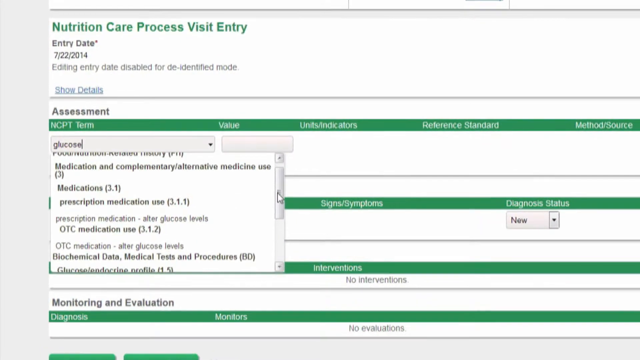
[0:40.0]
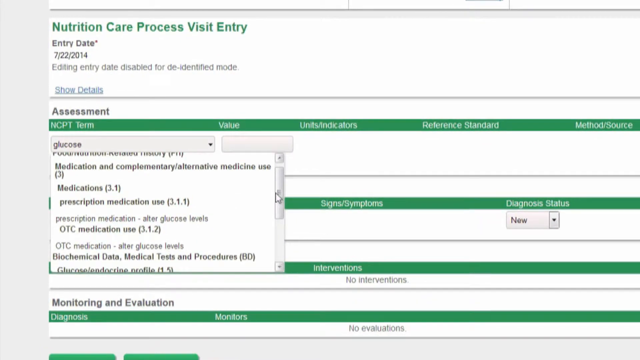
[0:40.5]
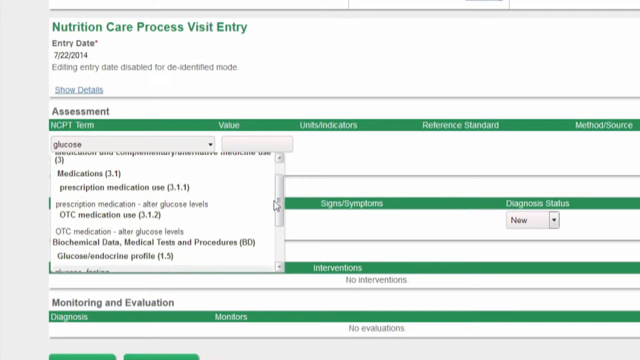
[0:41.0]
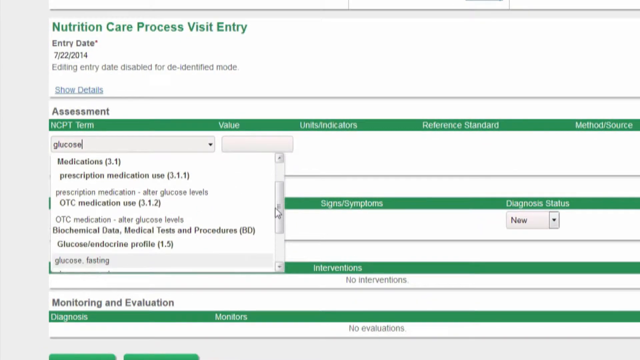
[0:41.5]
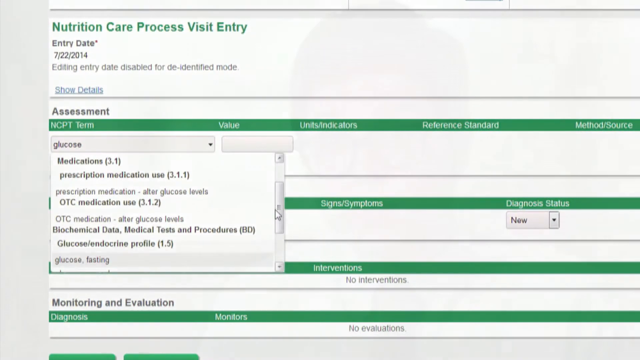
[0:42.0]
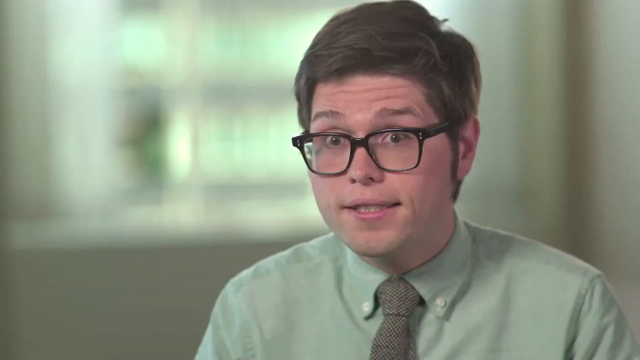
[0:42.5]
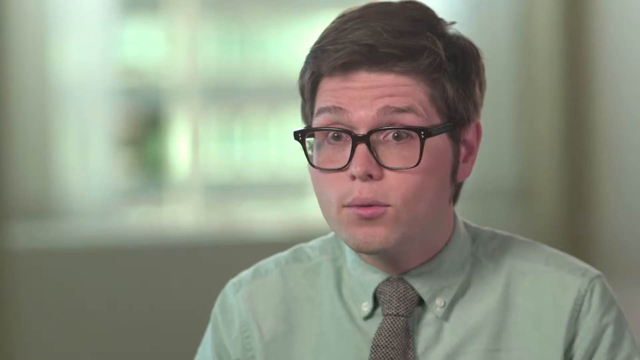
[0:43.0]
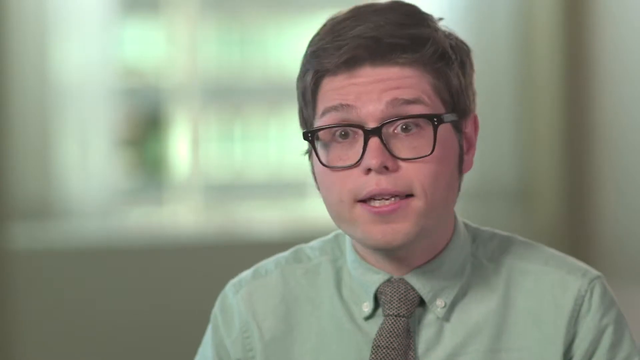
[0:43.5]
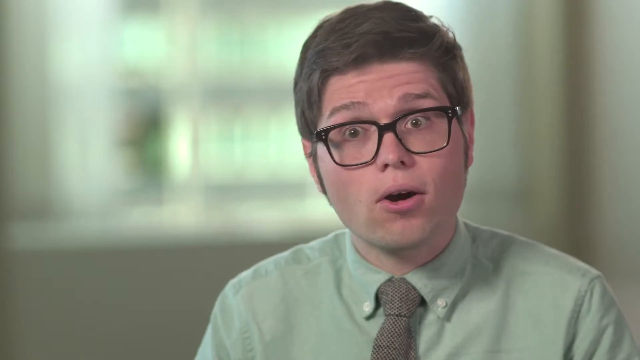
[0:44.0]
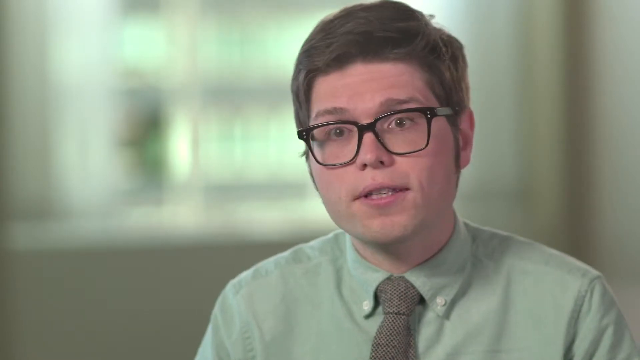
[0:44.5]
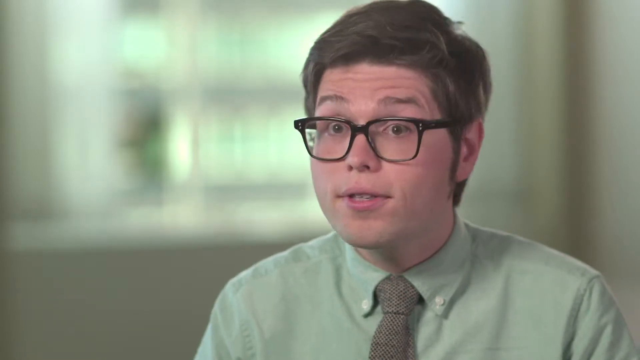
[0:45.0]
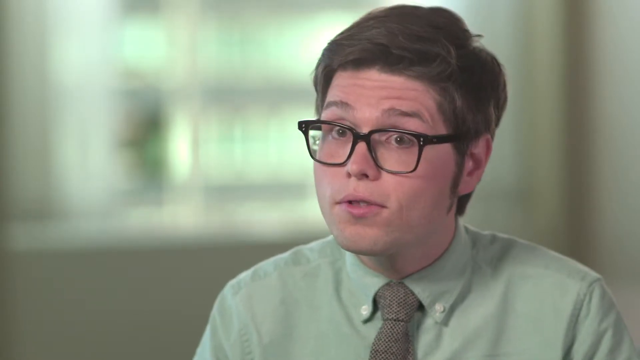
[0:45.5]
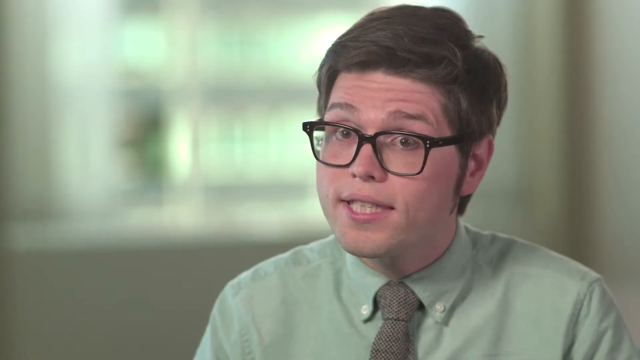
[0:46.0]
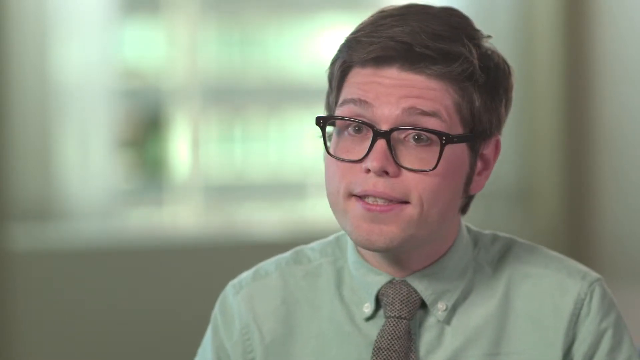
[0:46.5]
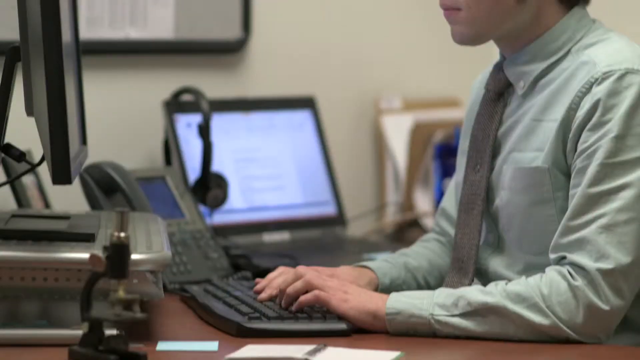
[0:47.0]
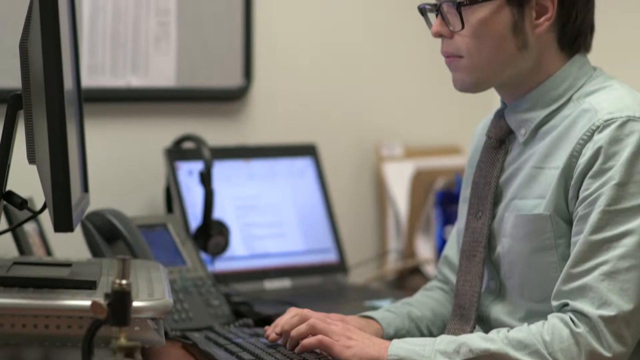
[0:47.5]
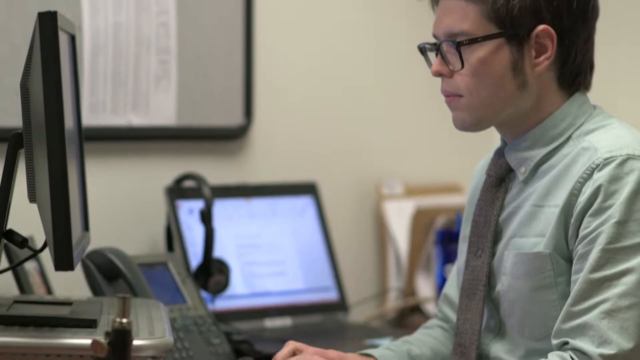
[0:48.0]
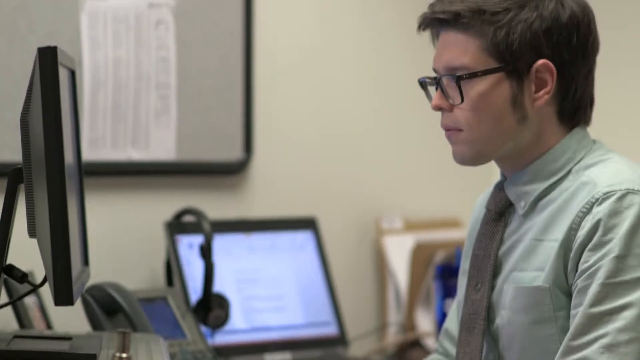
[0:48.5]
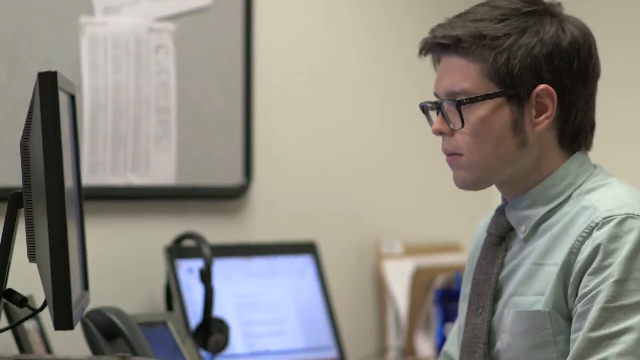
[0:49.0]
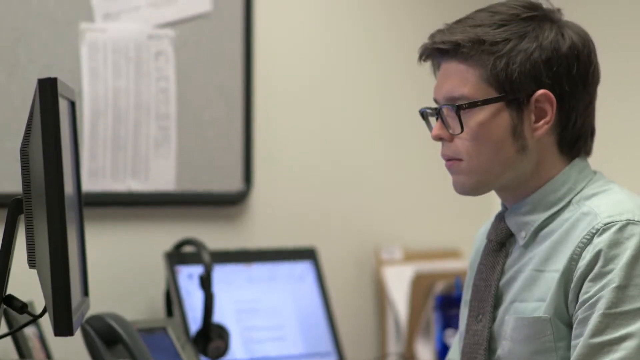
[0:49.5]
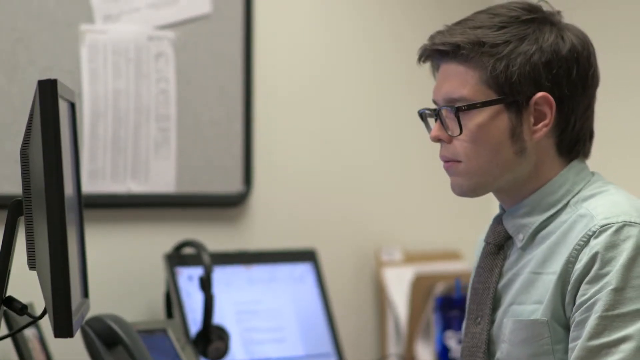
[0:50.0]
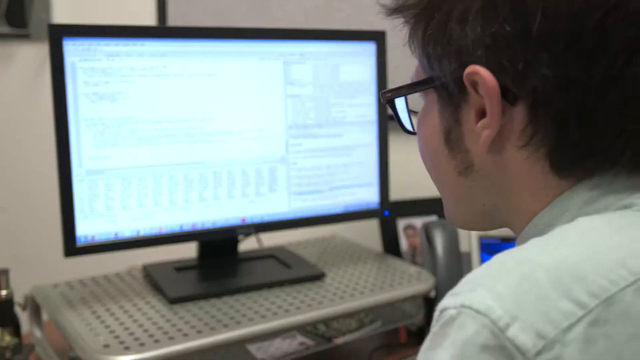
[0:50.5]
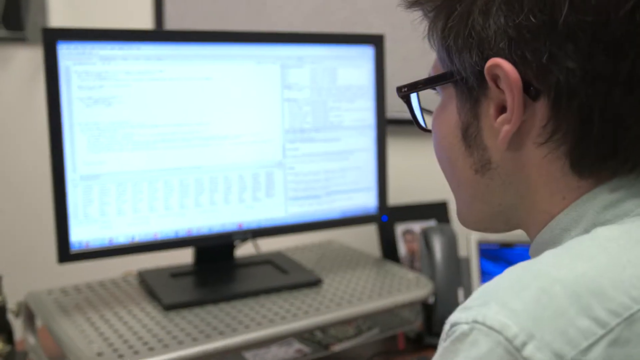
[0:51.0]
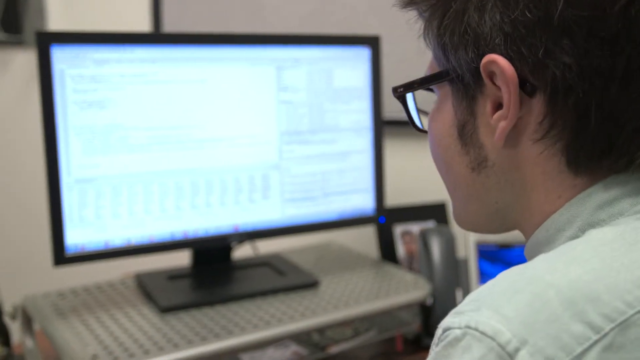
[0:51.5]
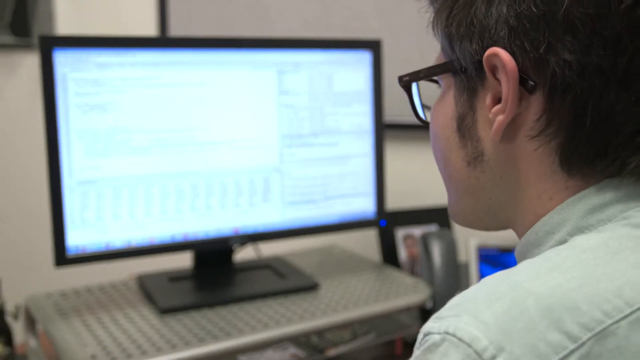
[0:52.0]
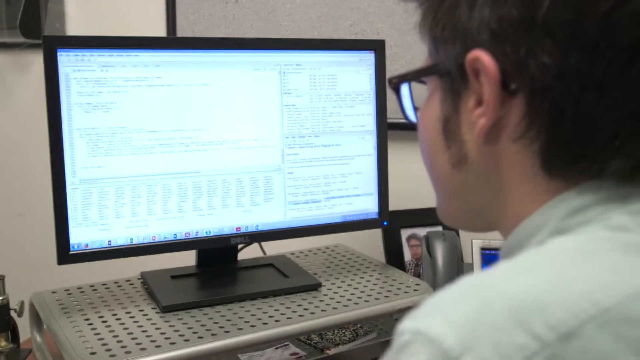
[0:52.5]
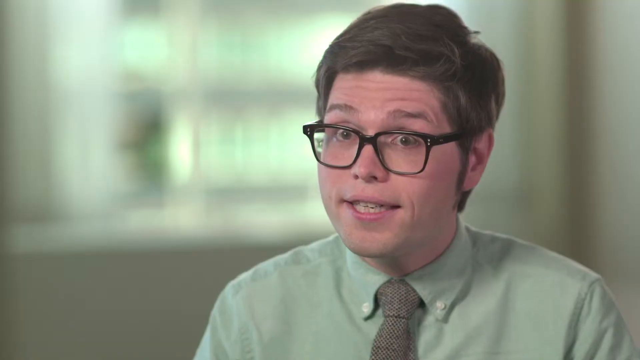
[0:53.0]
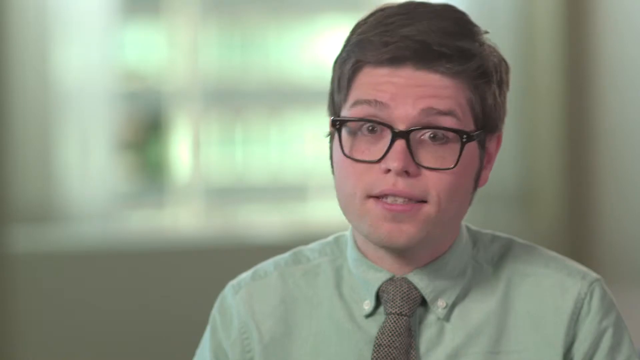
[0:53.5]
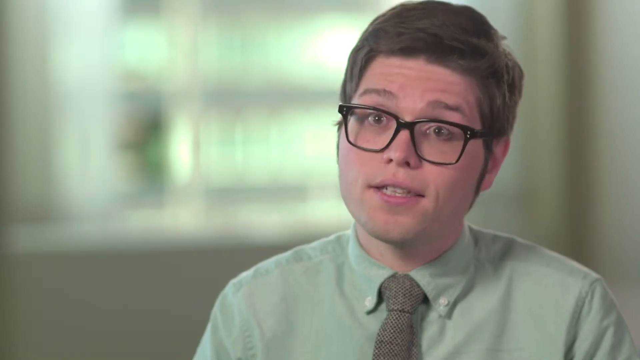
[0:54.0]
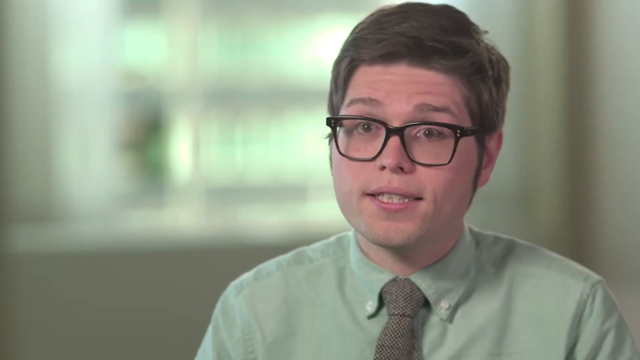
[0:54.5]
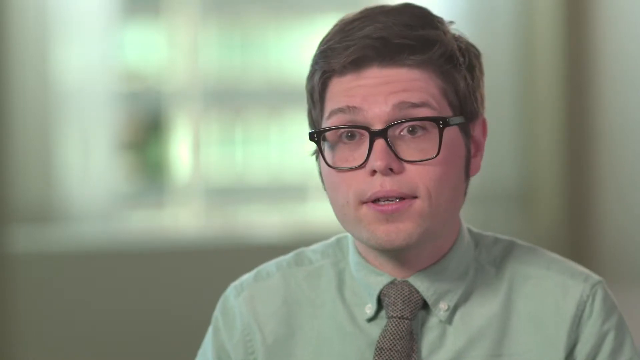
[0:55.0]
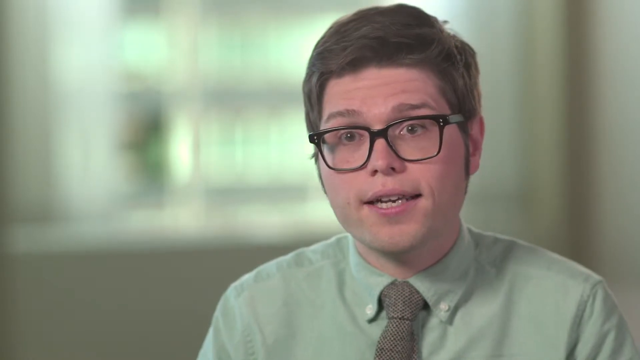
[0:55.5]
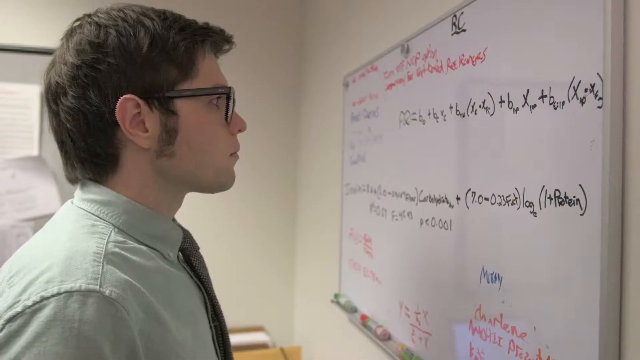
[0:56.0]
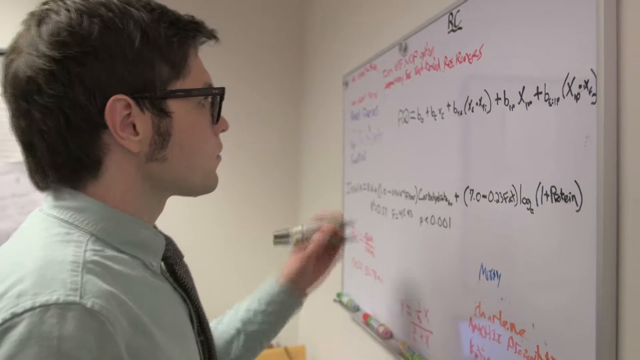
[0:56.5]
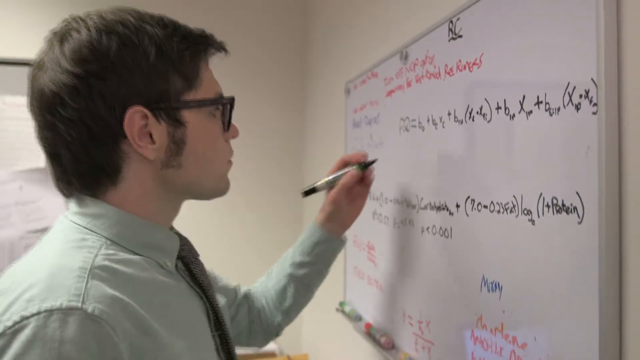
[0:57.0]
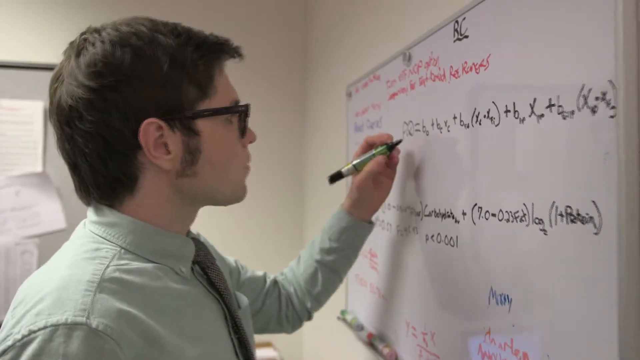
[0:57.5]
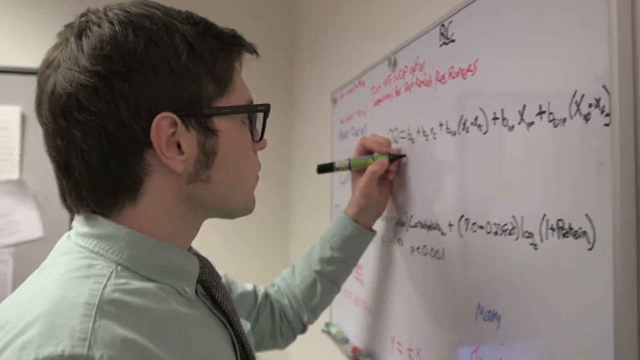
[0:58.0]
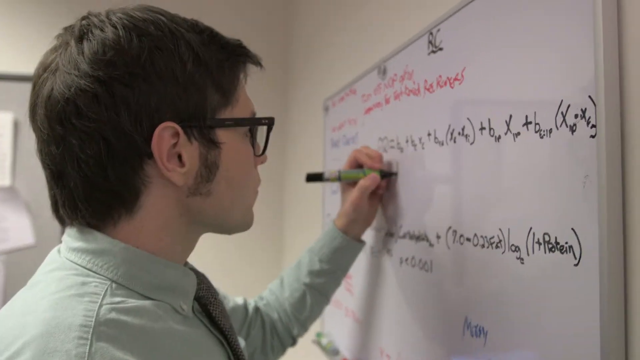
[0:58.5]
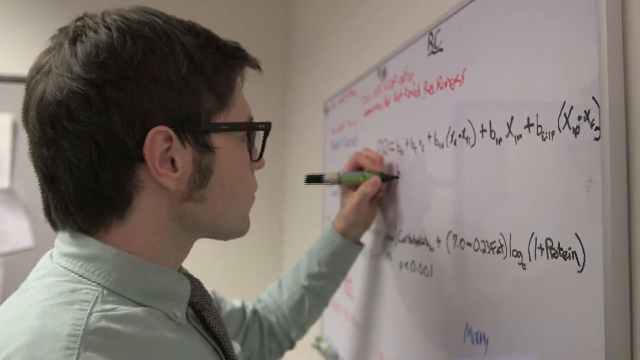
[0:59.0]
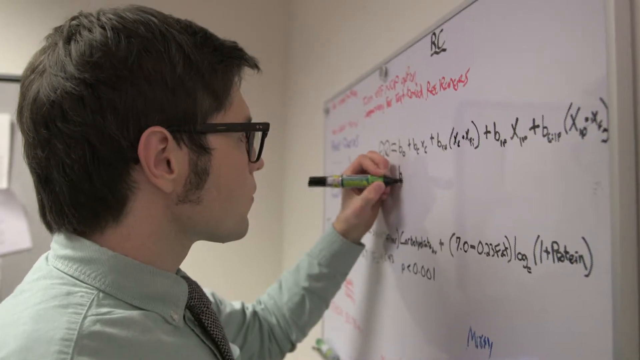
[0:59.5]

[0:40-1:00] The computer screen shows the nutrition care process visit entry form, with a white background and green stripes, an entry date, and information about medications. The video returns to the young man in the office, who has short dark hair, long black sideburns and black-rimmed glasses and speaks very sincerely. Next, in an office, he sits in front of a computer screen with another screen to his right; a pair of earphones hangs over the second screen. A big board on the wall beside him holds a long sheet of paper with several columns of figures and words. He is busy at the computer, looking at the different forms on the screen. He is then shown back in the office in front of the window, speaking. After that he appears to be in a classroom with a large white dry erase board, writing figures on it in black ink, with some red ink over that. The video then returns to the form.